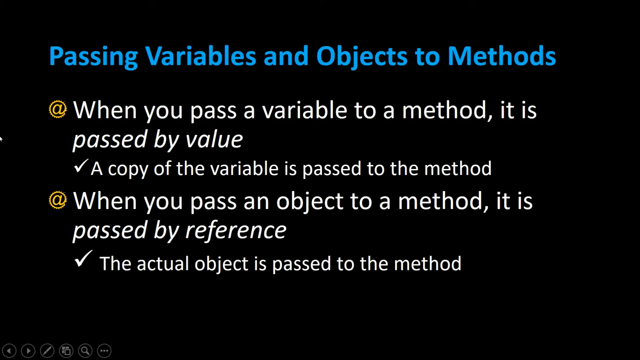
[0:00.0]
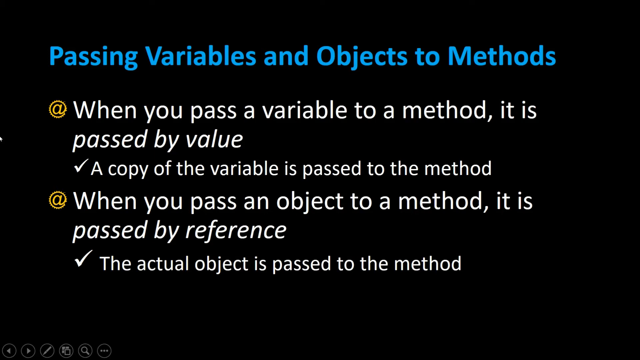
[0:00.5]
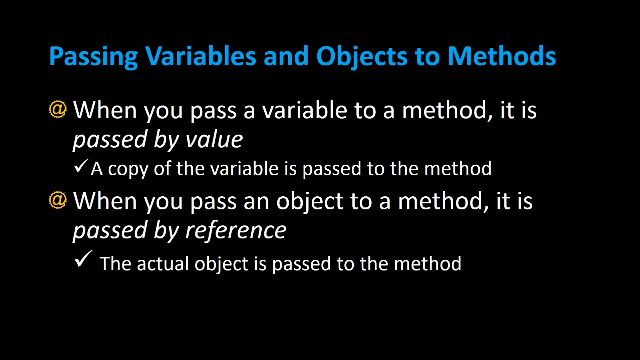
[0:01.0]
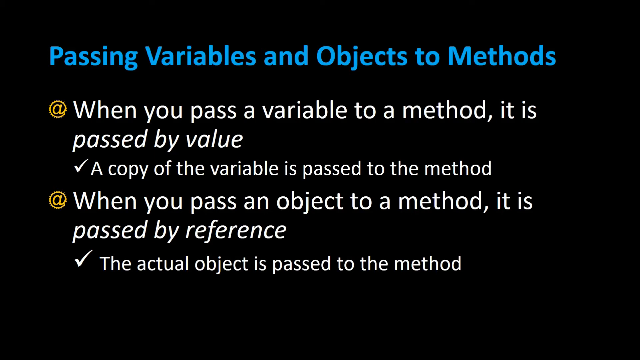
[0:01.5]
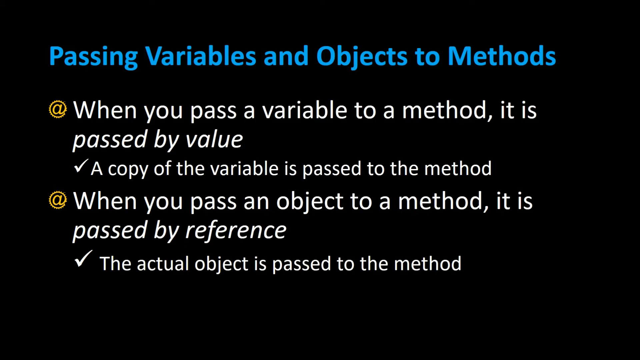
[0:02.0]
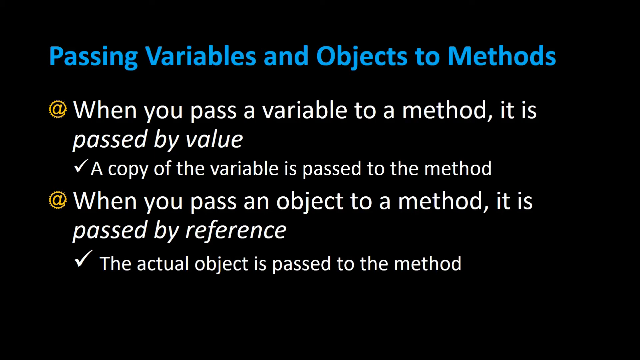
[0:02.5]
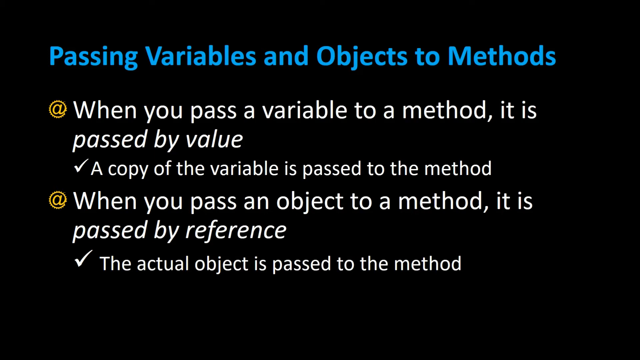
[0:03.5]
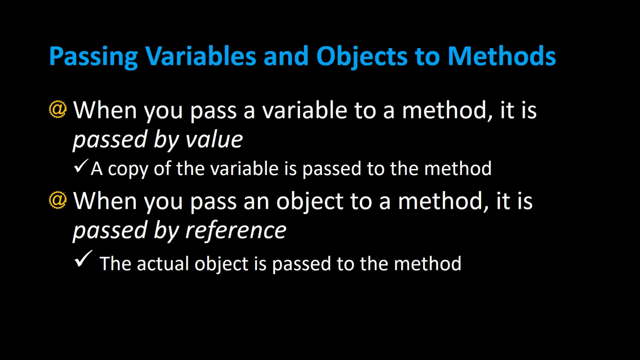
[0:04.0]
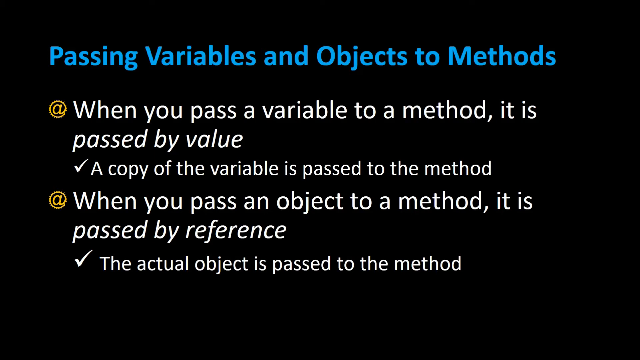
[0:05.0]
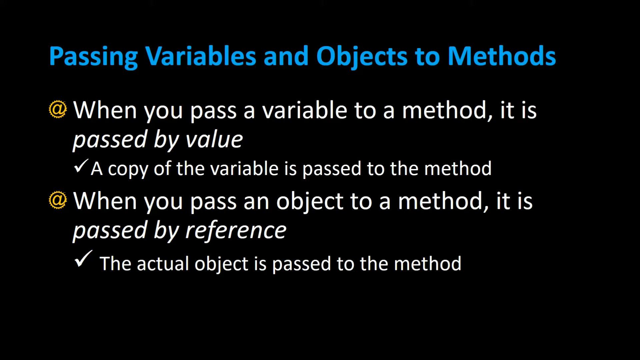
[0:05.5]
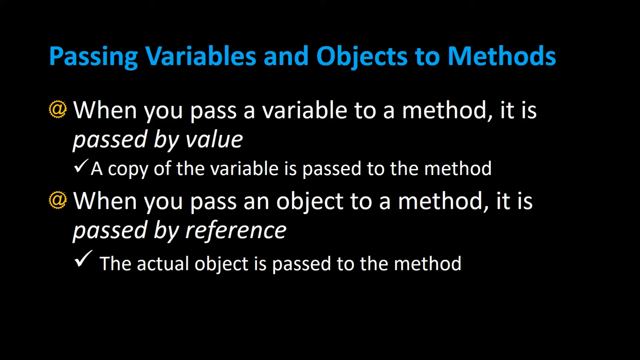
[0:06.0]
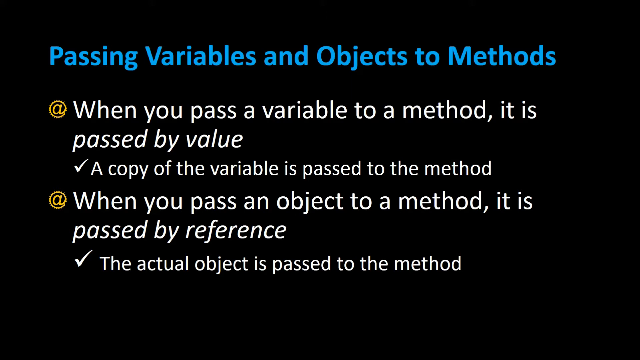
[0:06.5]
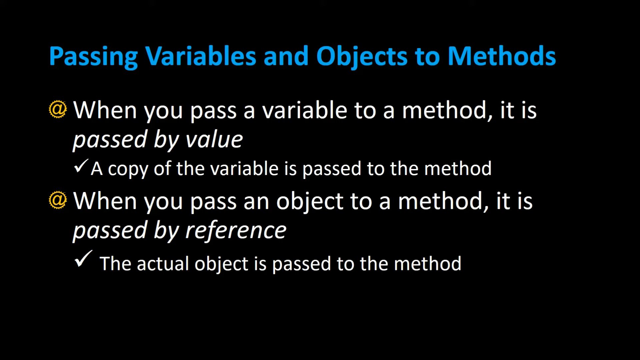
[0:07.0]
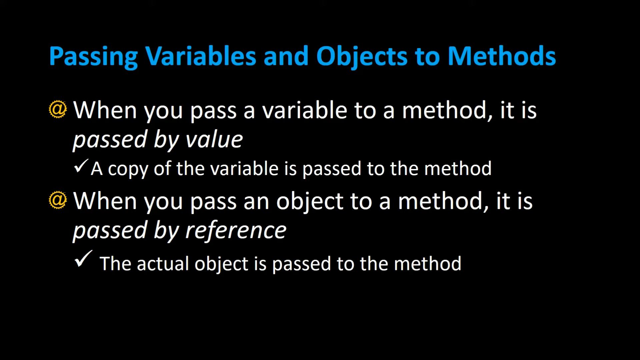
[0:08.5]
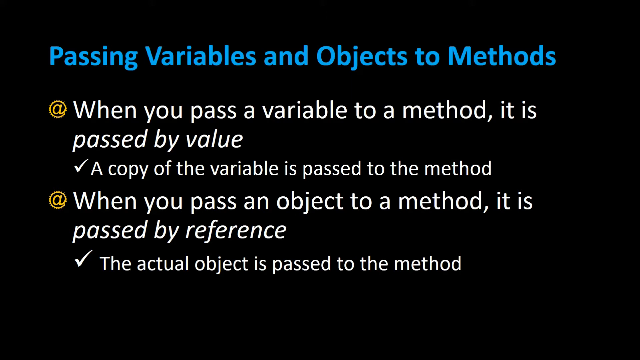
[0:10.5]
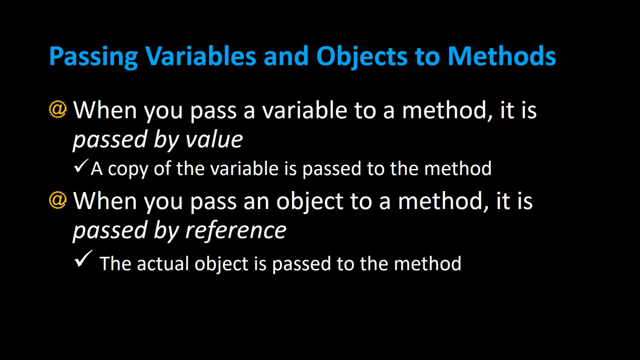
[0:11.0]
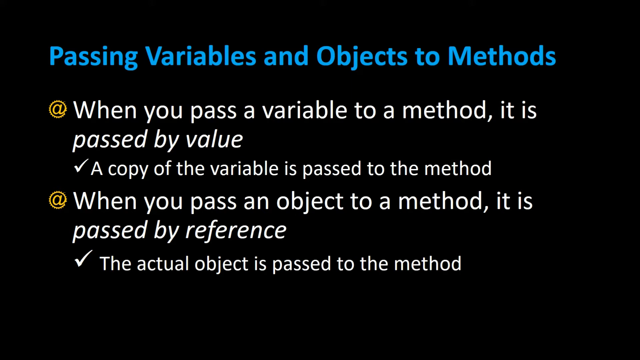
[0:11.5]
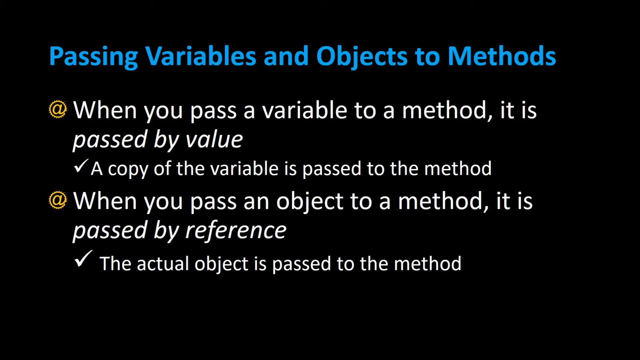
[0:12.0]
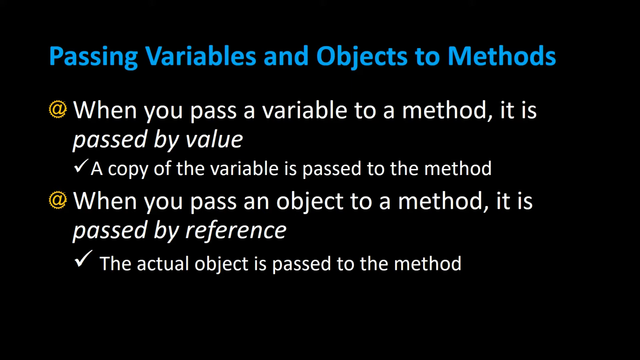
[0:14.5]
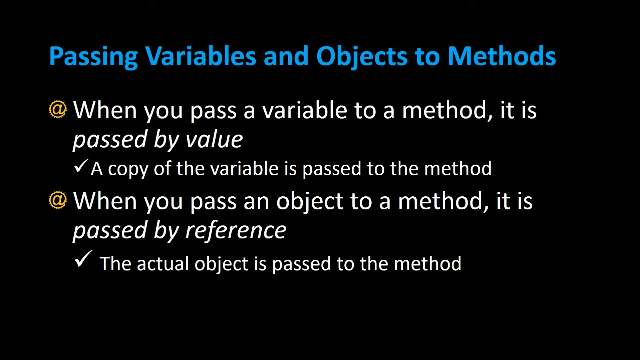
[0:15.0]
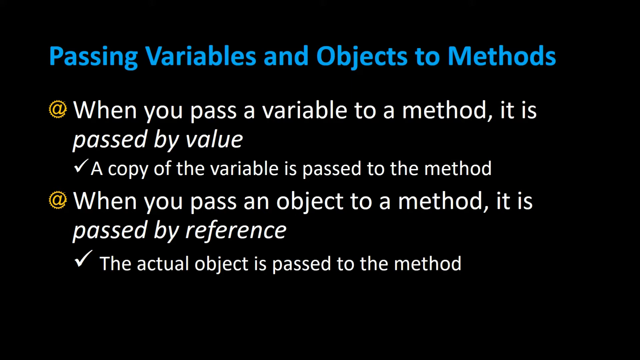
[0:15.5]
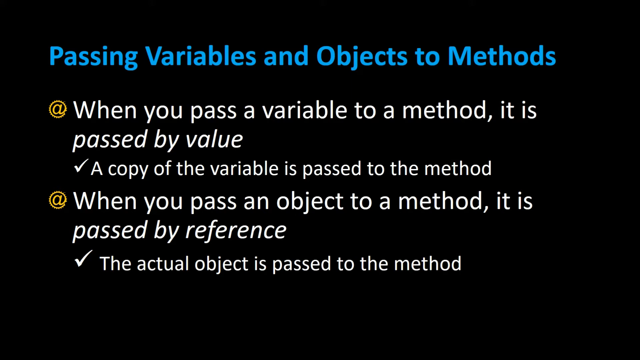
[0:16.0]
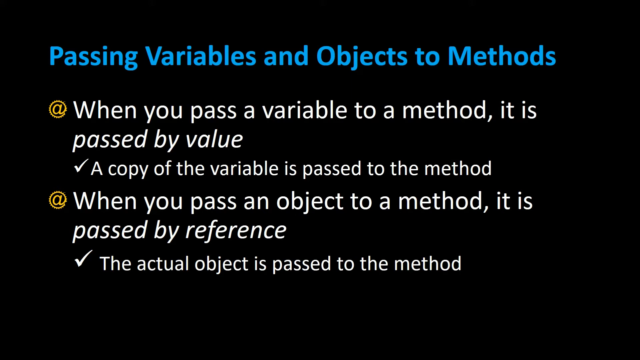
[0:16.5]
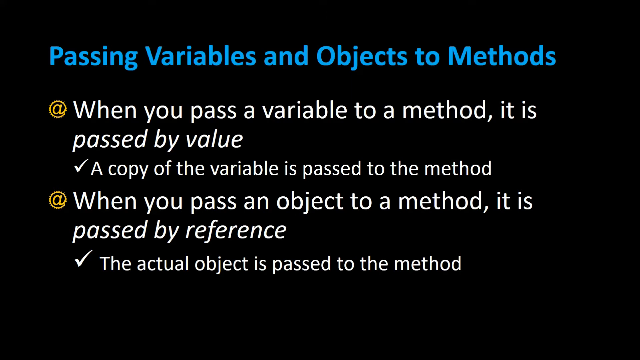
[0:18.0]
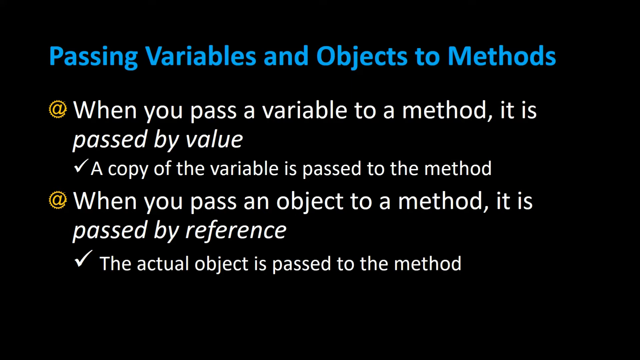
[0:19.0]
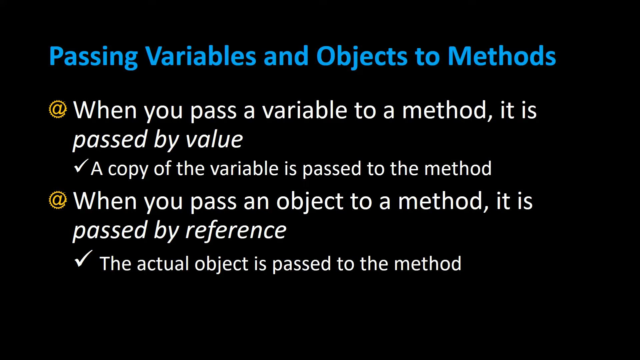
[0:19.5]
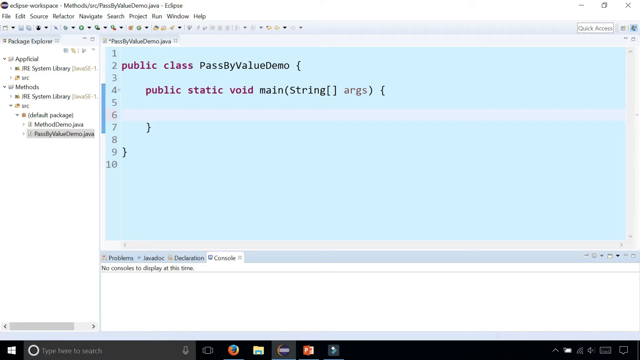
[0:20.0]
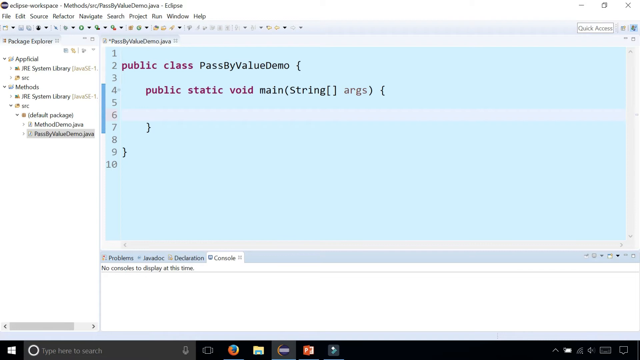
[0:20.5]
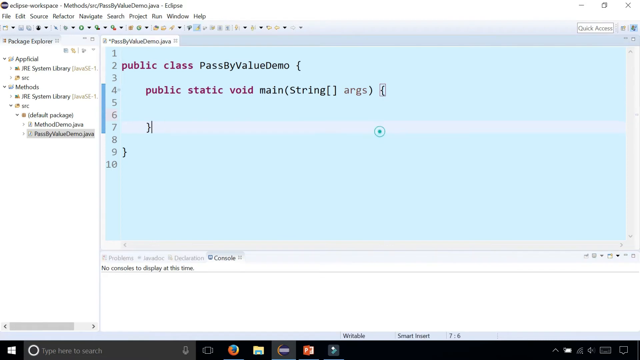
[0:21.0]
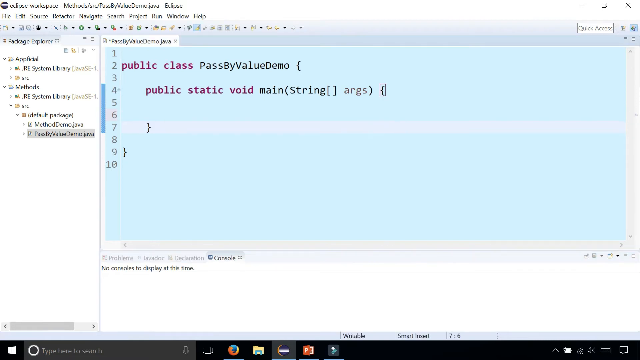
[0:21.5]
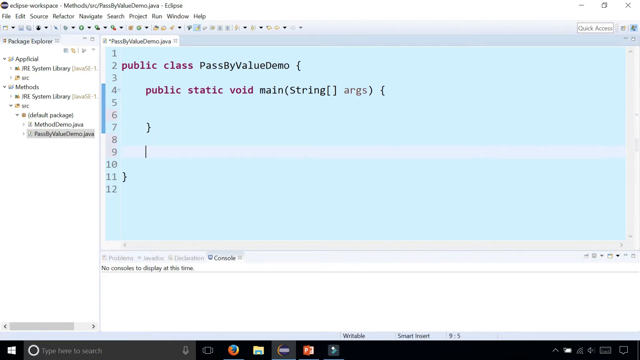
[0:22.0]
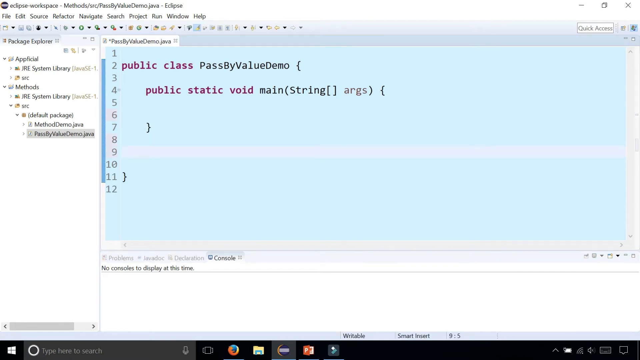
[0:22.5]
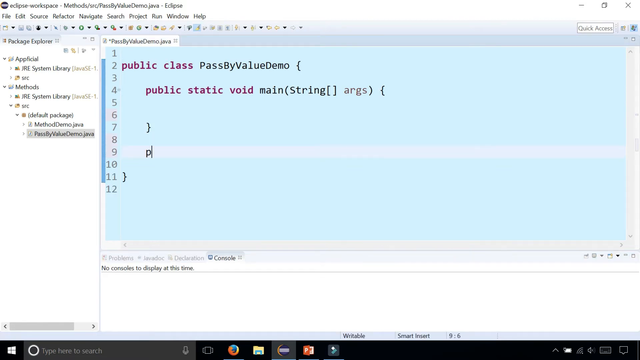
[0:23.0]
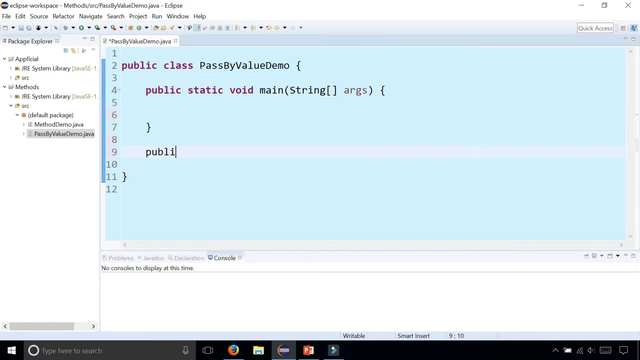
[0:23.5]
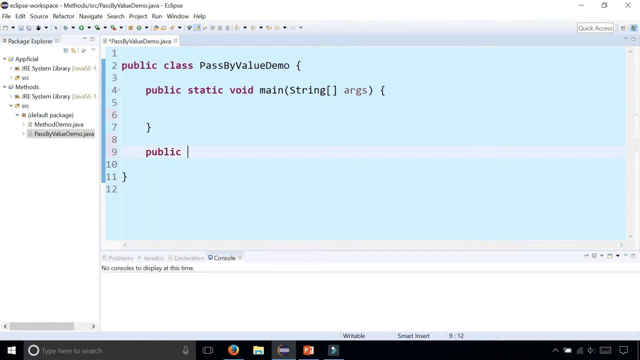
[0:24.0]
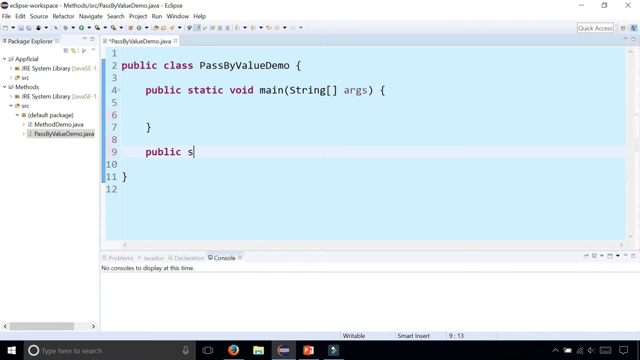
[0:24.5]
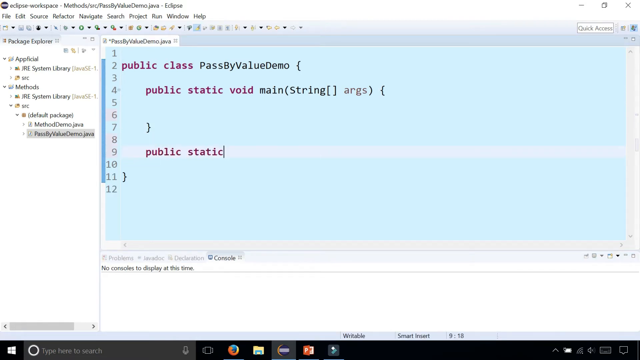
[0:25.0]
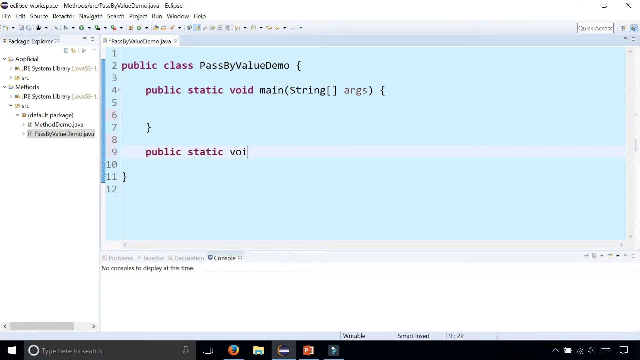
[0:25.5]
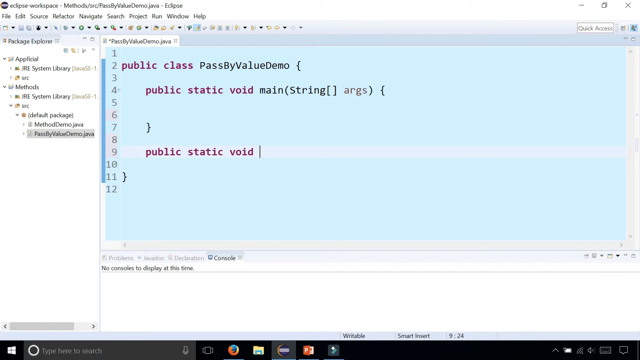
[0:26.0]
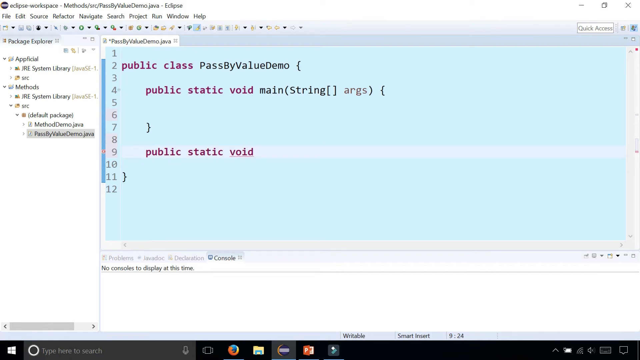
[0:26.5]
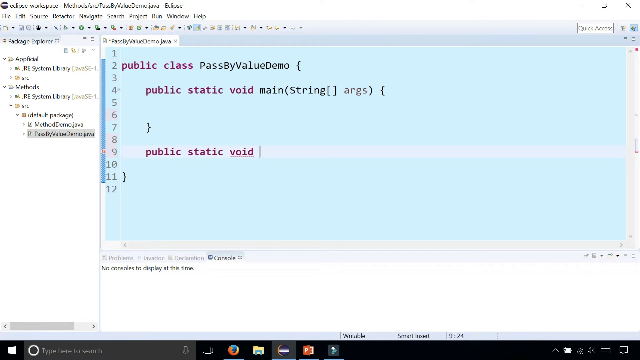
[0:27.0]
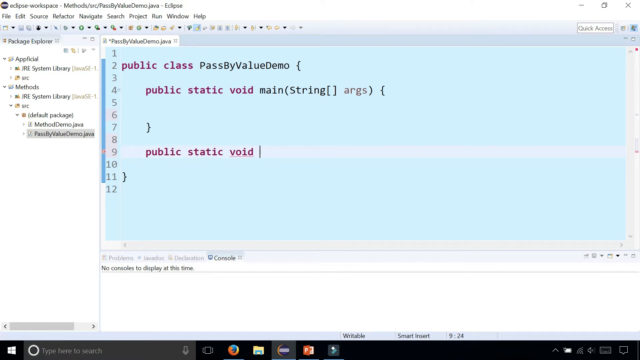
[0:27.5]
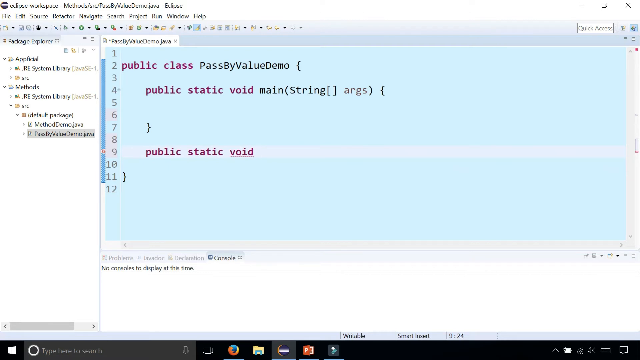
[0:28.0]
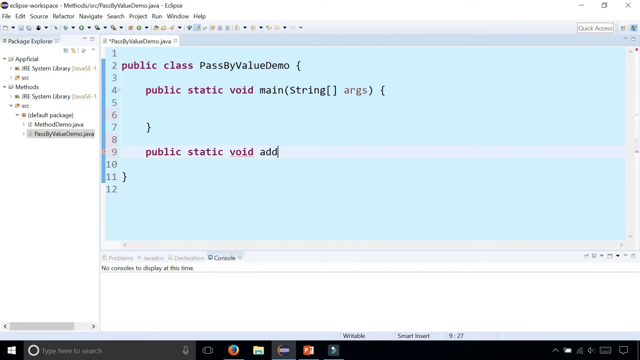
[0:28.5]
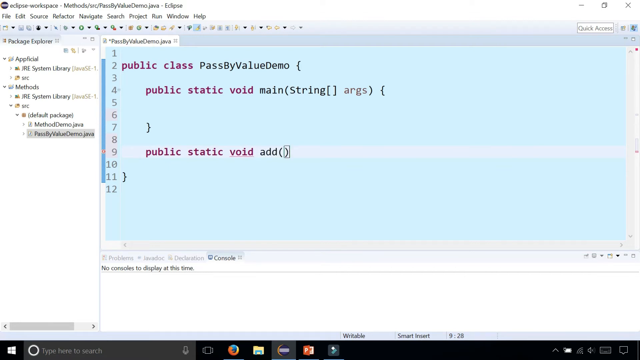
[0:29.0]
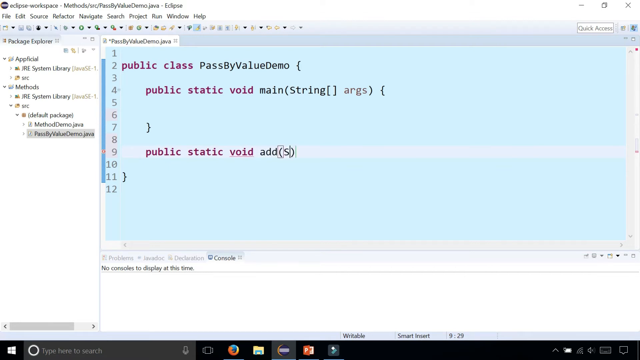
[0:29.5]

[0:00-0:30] An informational flyer appears on a black background. Blue title text reads "passing variables and objects to methods." White text below reads "when you pass a variable to a method, it is passed by value. A copy of the variable is passed to the method. When you pass an object to a method, it is passed by reference. The actual object is passed to the method." There are two yellow ampersand symbols and two check marks. The video then moves to a screenshot of a computer program, the Eclipse workspace, titled methods. A menu runs across the top: File, Edit, Source, Refactor, Navigate, Search, Project, Run, Window, Help. A vertical menu along the left side lists items including JRE System Library, Default Package and PassByValueDemo.java. In the center of the screen is code beginning with public class PassByValueDemo and public static void main(String[] args). Someone types in public static void add.